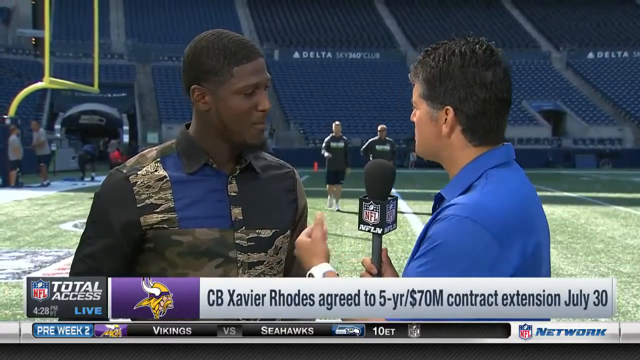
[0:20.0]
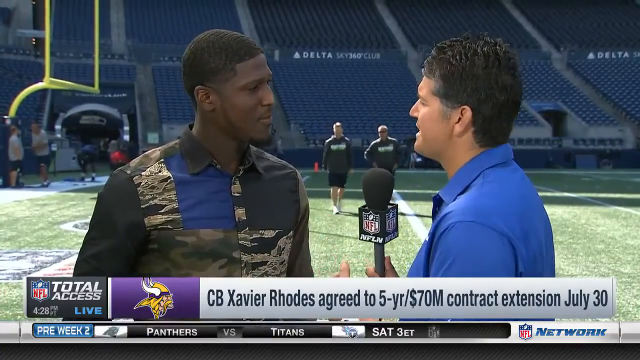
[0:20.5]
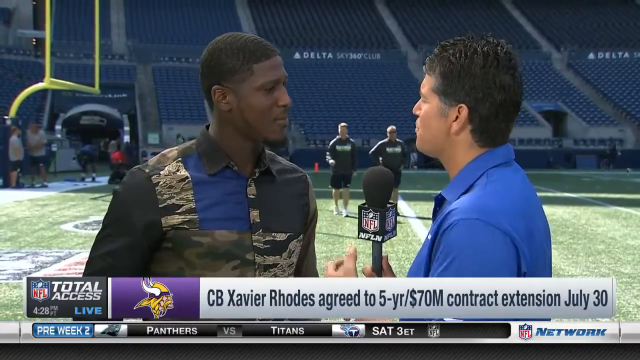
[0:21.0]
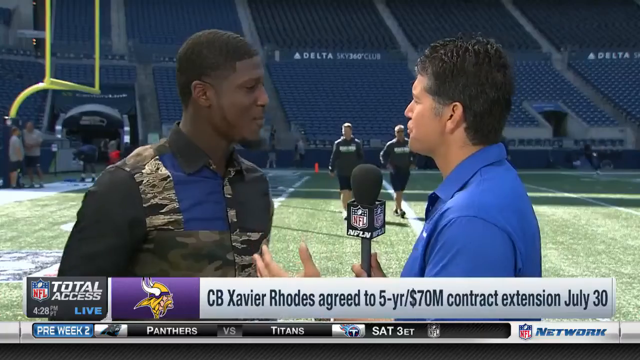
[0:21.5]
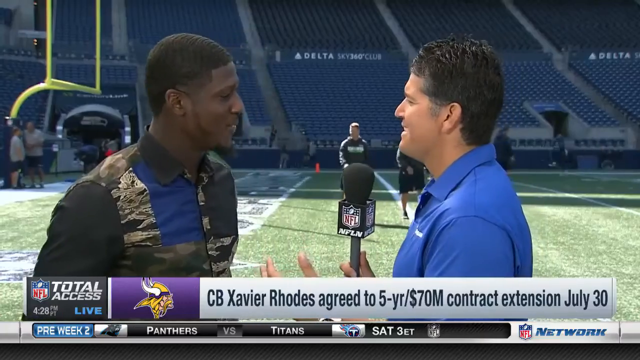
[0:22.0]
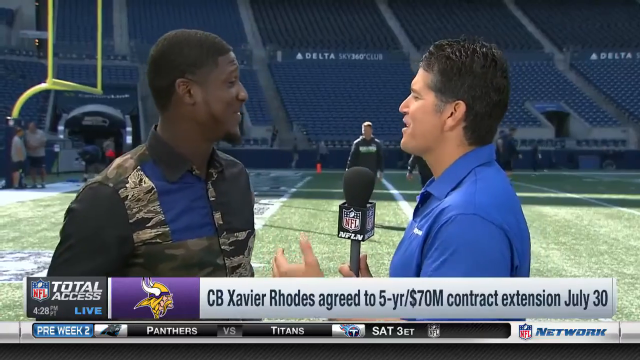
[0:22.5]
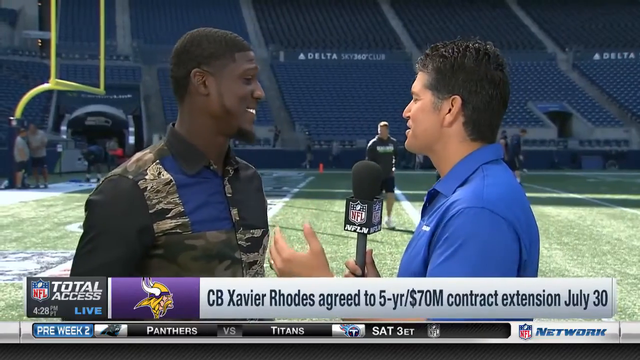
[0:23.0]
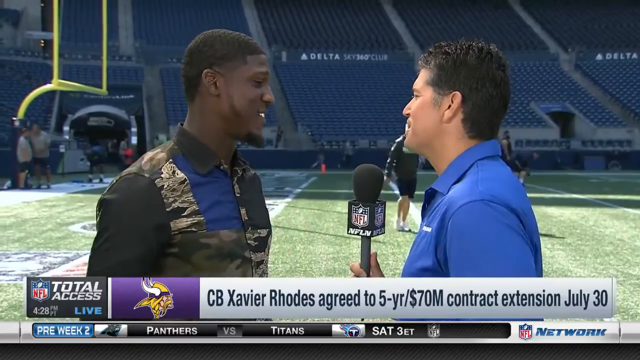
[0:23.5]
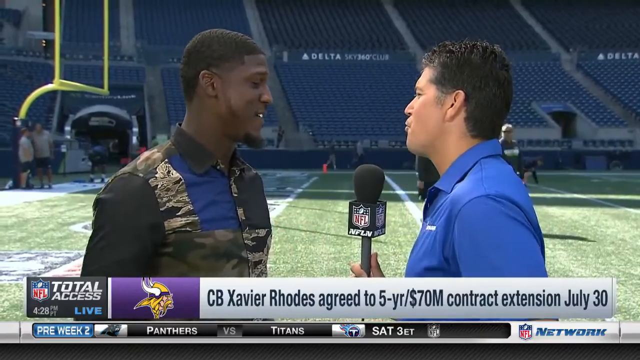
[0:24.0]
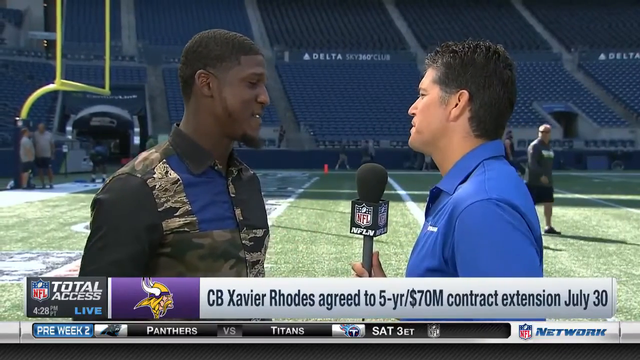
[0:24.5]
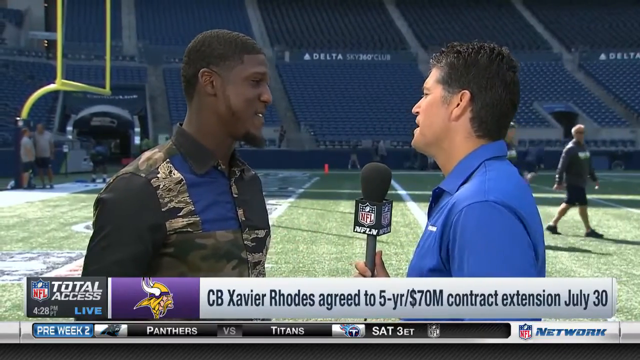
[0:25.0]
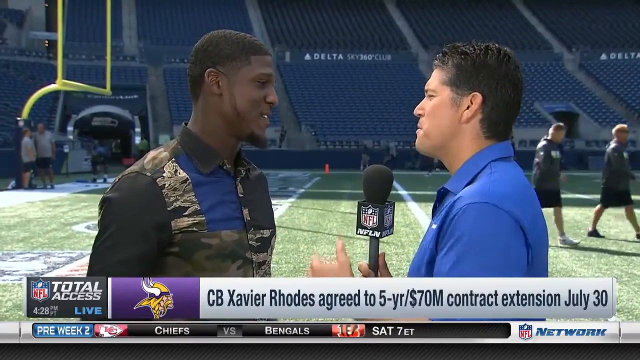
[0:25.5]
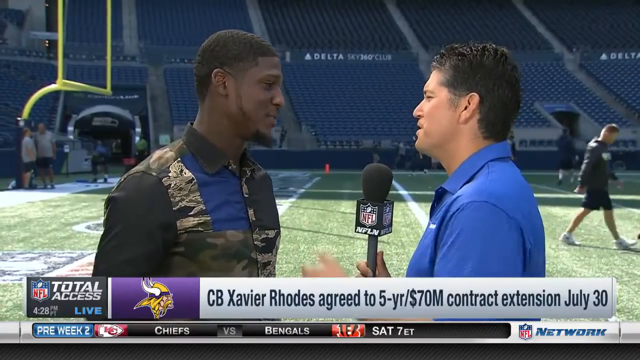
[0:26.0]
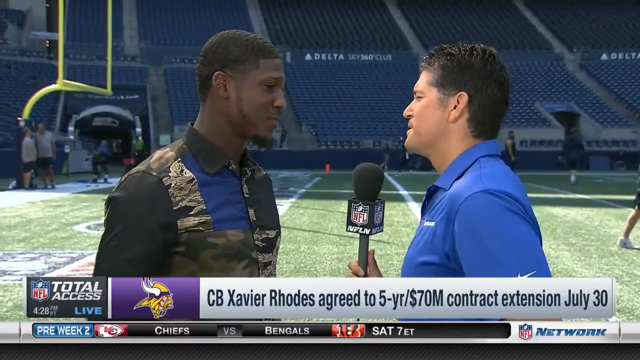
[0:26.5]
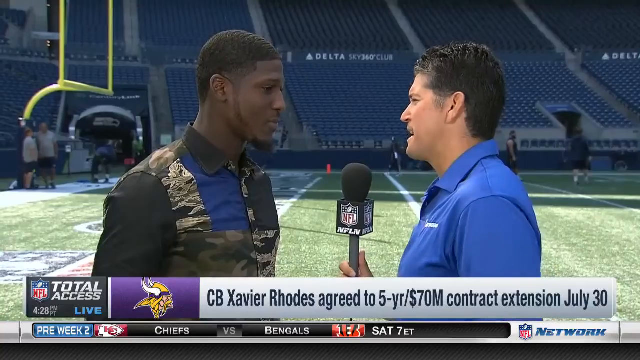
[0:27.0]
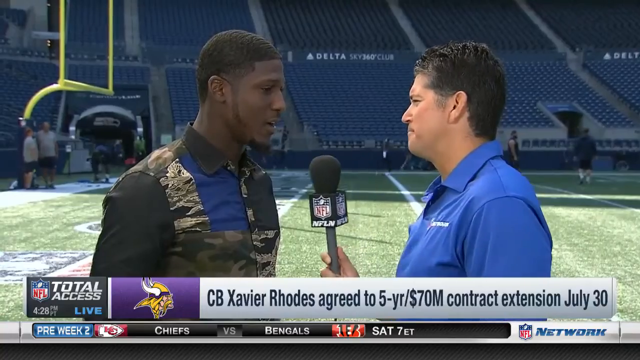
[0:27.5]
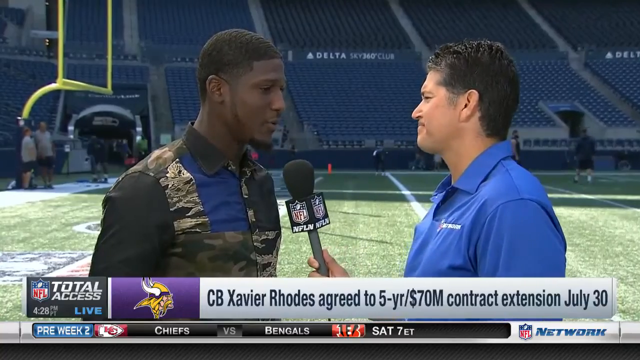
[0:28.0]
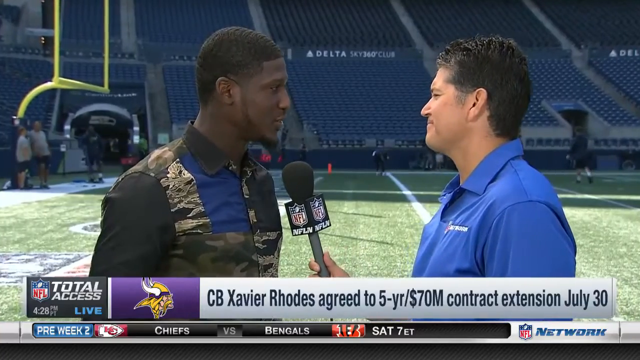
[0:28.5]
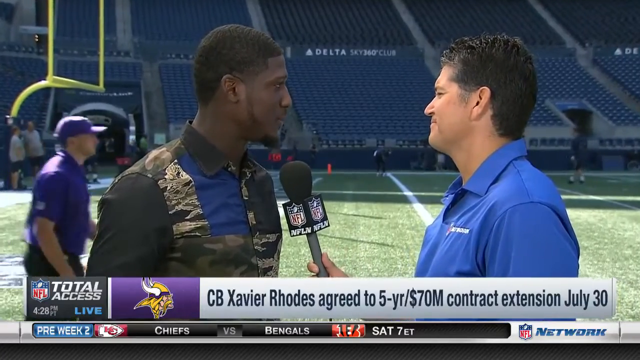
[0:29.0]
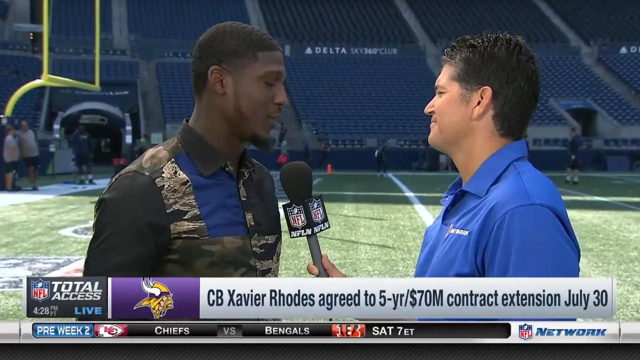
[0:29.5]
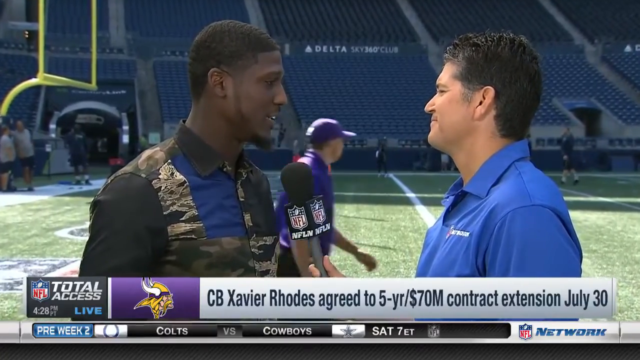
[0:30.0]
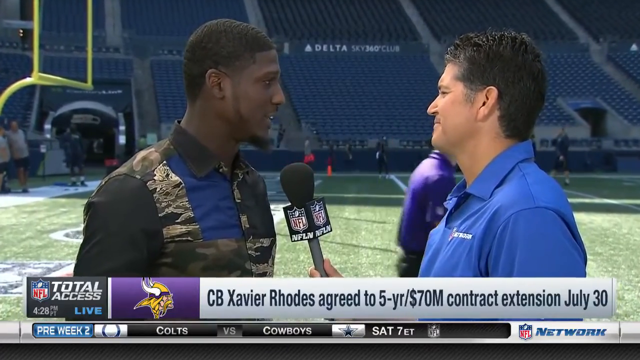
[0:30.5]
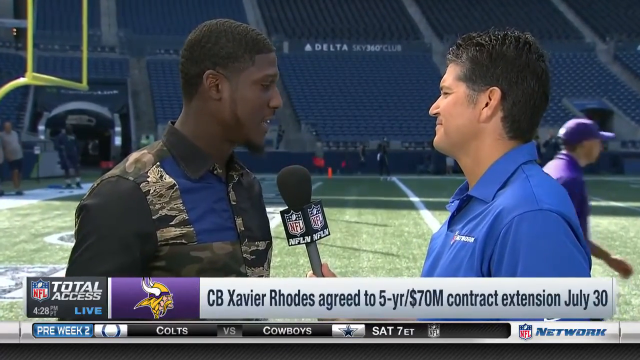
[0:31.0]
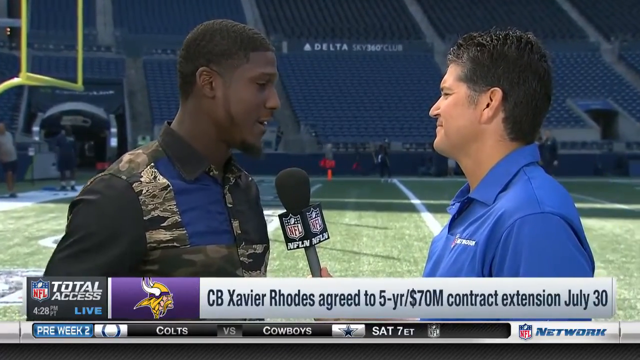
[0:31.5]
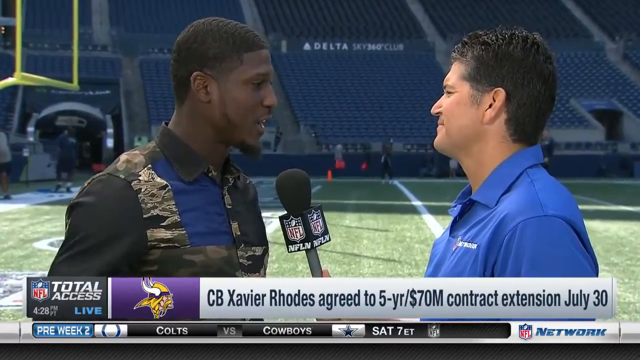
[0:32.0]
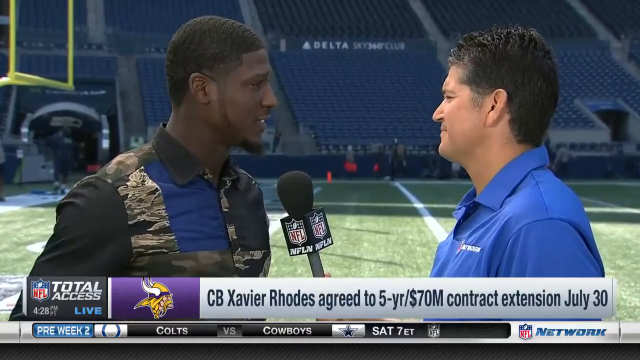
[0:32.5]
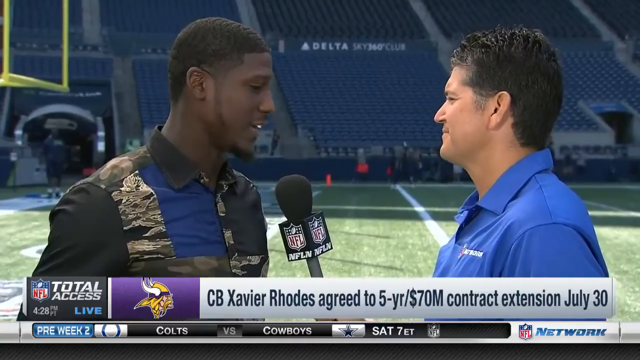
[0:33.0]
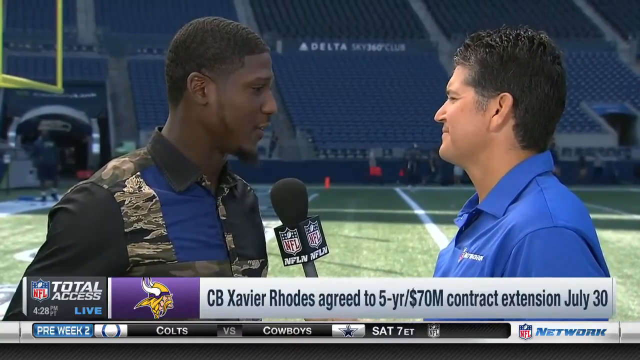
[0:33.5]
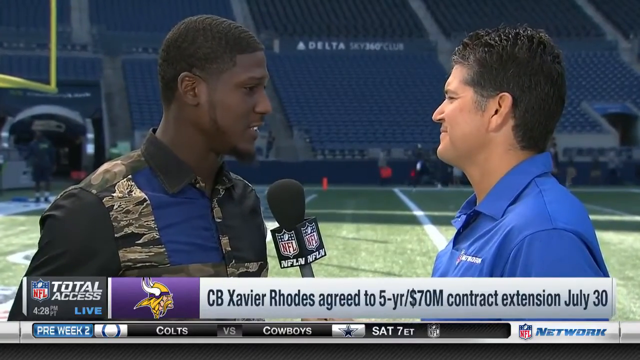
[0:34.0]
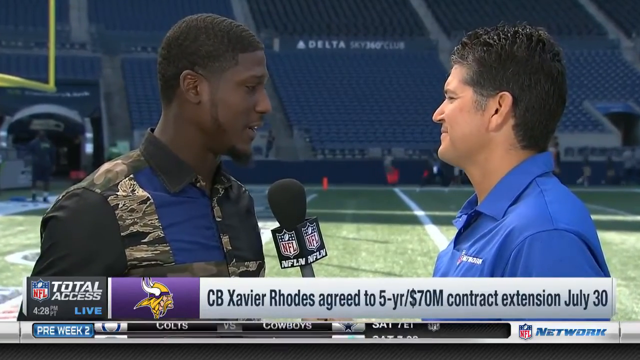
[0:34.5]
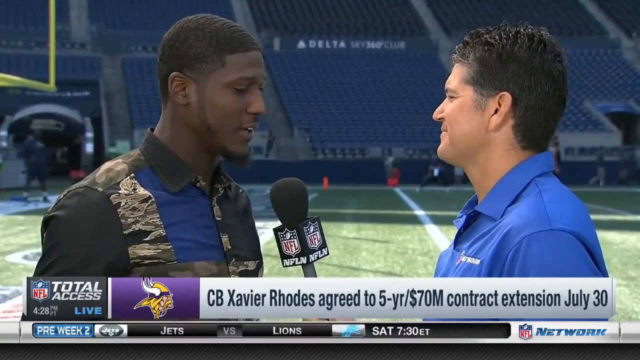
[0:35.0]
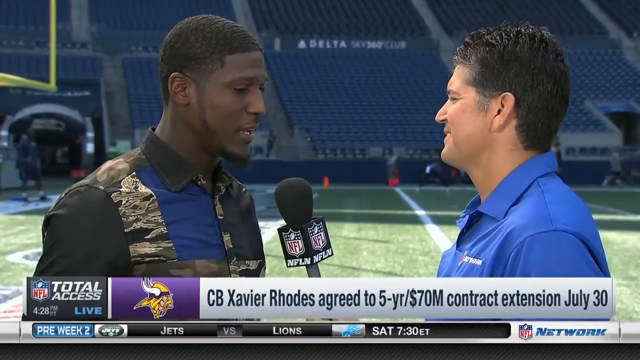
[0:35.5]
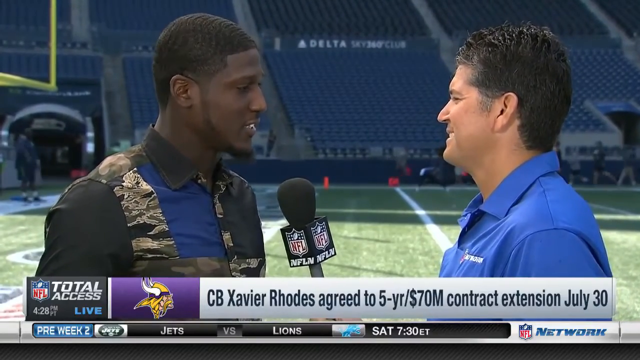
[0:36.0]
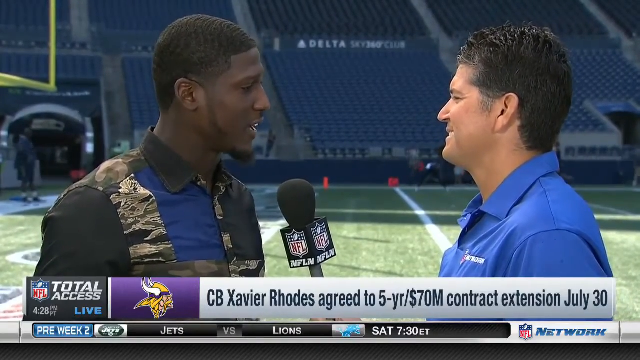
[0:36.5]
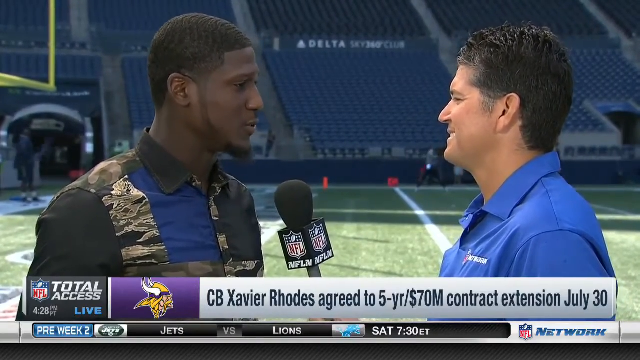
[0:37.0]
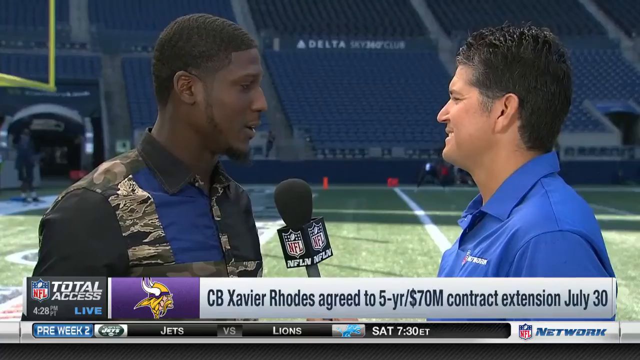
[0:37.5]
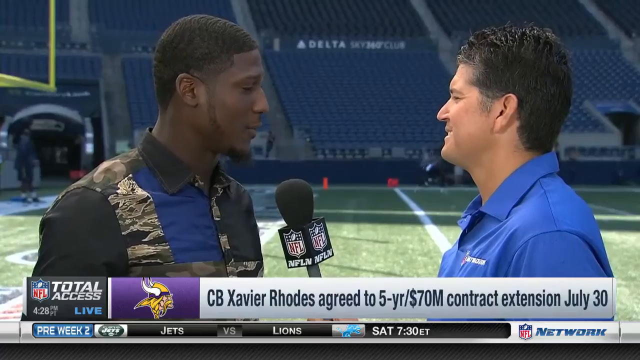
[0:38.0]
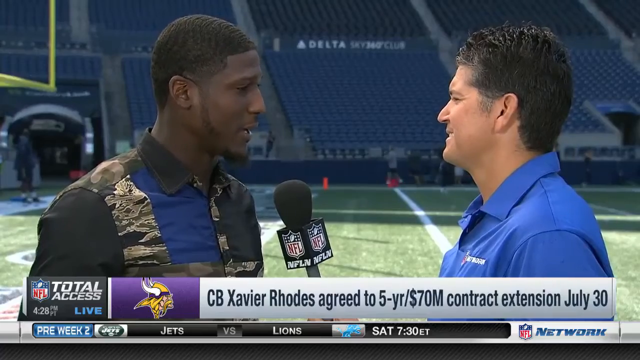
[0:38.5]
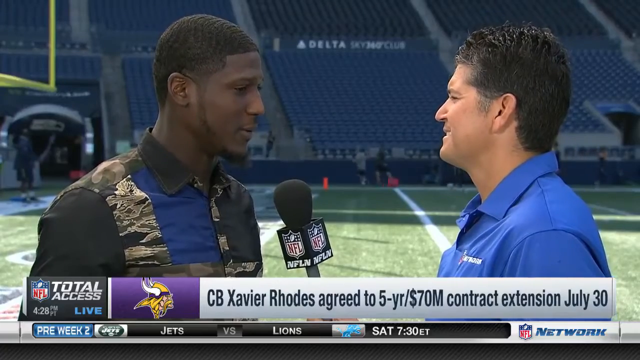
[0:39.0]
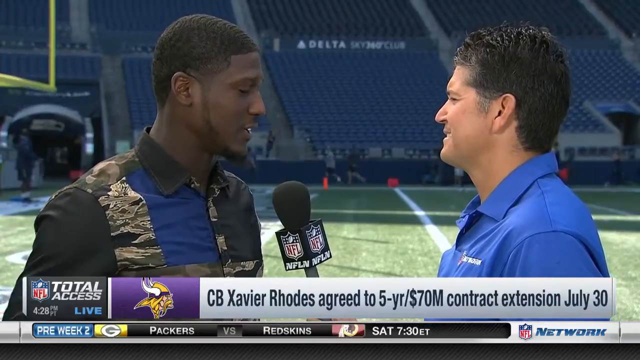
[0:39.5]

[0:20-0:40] One man interviews another. The man with the microphone wears a blue polo shirt and is turned away from the camera, showing his left-hand side; he is interviewing a Black man in a smart, camouflage-style shirt. In the background people in t-shirts and shorts mill about, the tiered seating is completely empty, and there appears to be some sort of American football goal on the left-hand side. Text graphics at the bottom of the screen refer to CB Xavier Rhodes agreeing to a five-year, 70 million contract extension. The man with the microphone talks into it, using his left hand to emphasize points, raising it and dropping it to his side. When he finishes speaking he purses his lips, and his right hand moves the microphone underneath the other man's mouth. The other man starts talking into the microphone, maintaining eye contact with the interviewer, shrugging his shoulders slightly a couple of times; movement in his shoulders shows him using his right hand to emphasize his points. The camera kind of zooms in to a head-and-shoulders shot, and people run in the background.